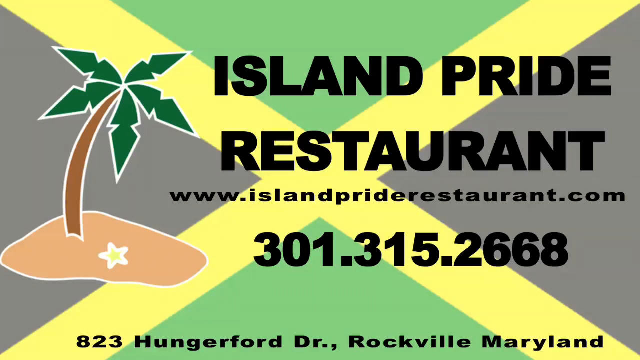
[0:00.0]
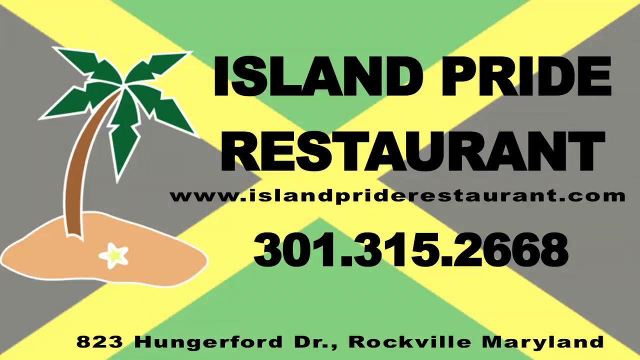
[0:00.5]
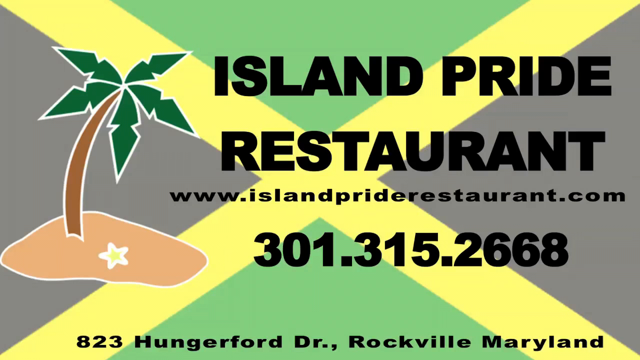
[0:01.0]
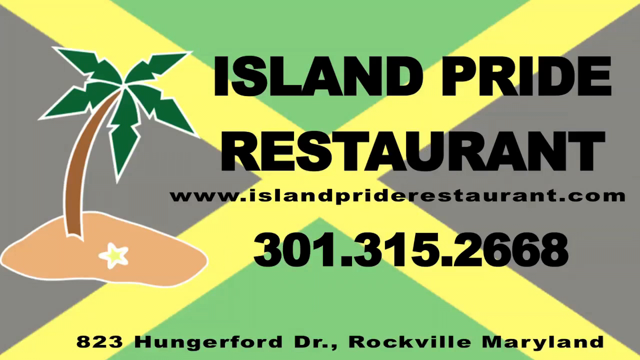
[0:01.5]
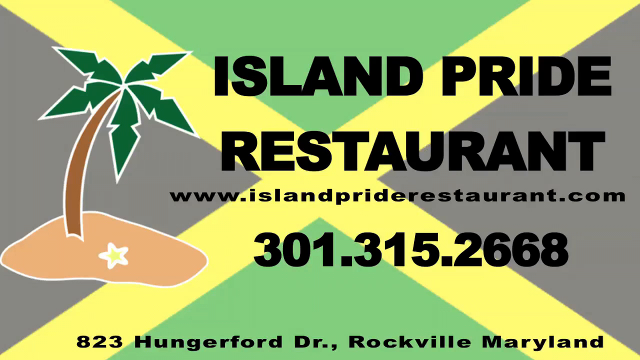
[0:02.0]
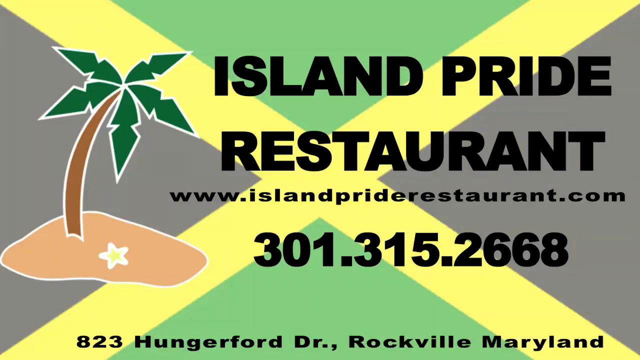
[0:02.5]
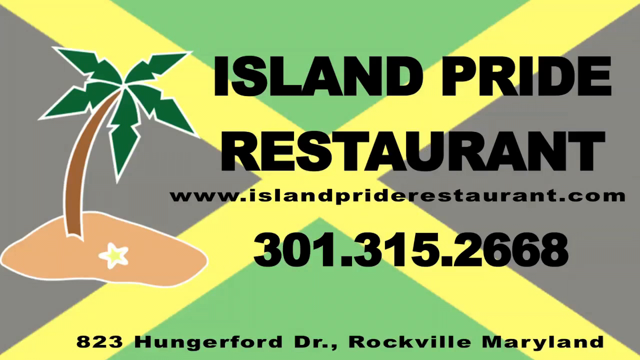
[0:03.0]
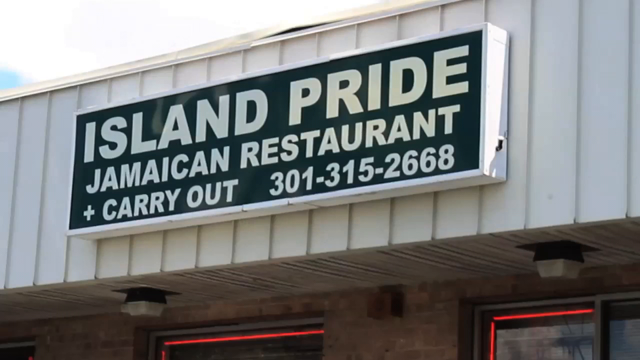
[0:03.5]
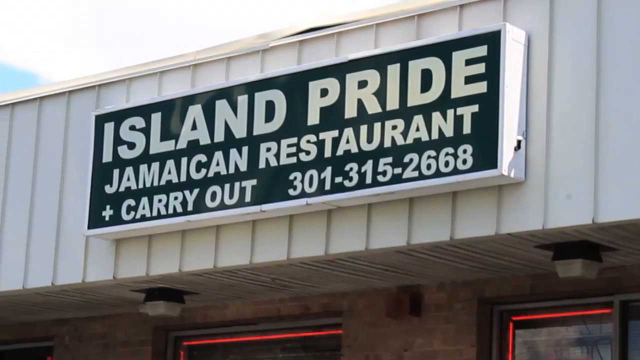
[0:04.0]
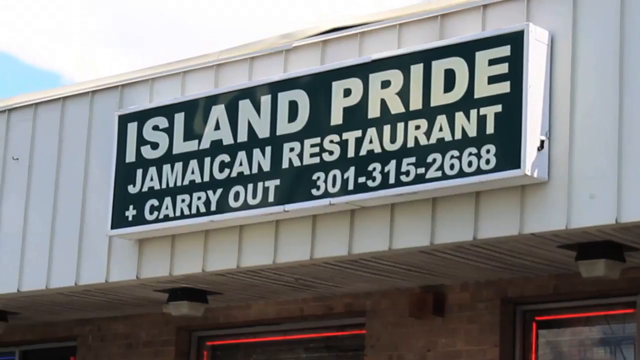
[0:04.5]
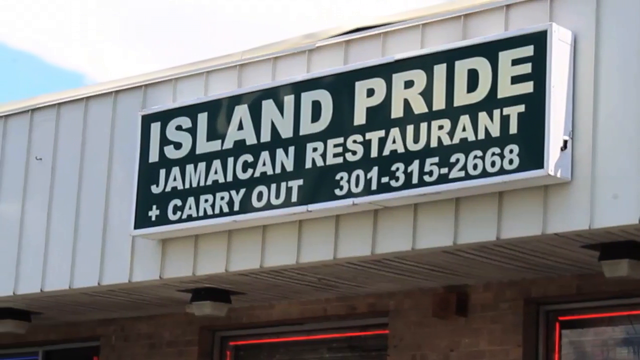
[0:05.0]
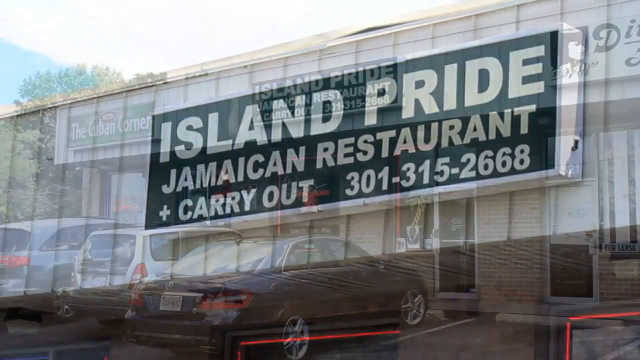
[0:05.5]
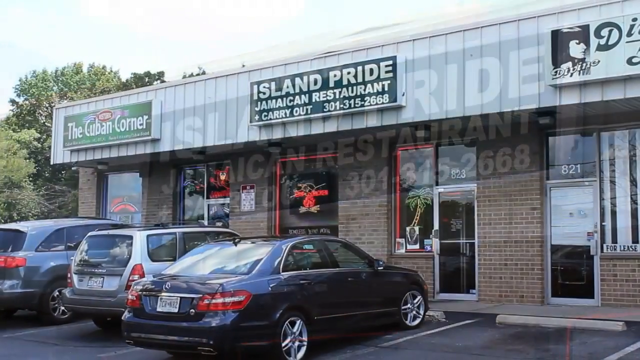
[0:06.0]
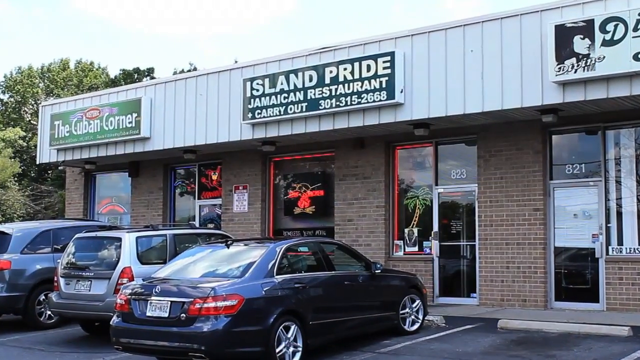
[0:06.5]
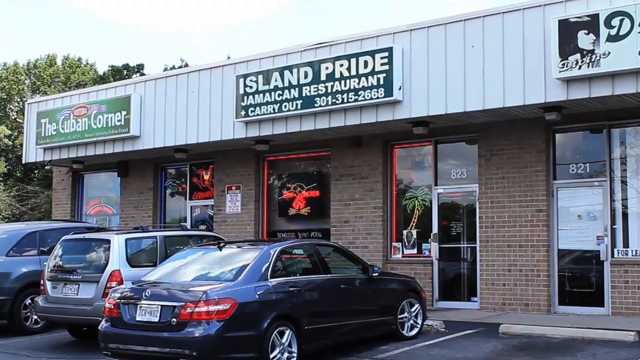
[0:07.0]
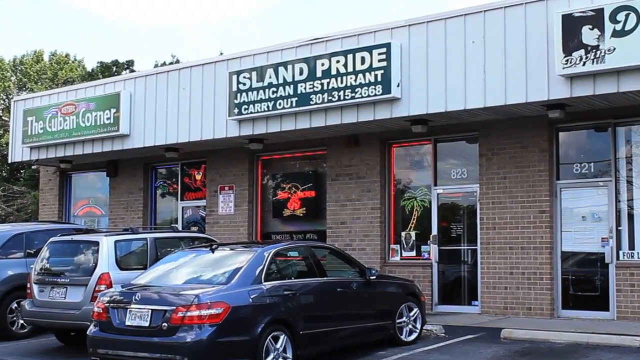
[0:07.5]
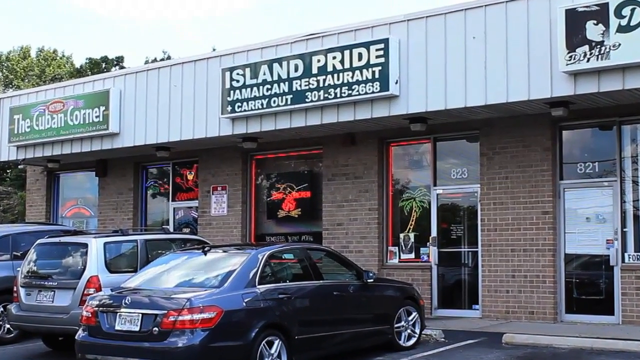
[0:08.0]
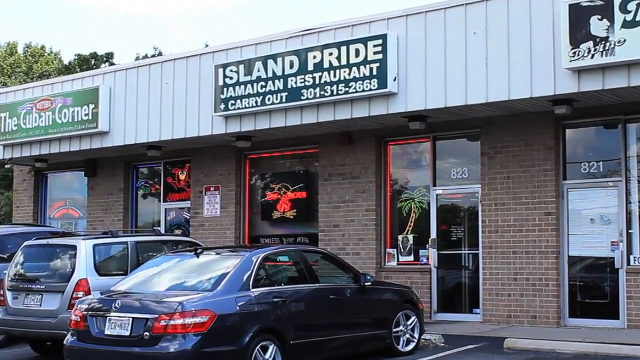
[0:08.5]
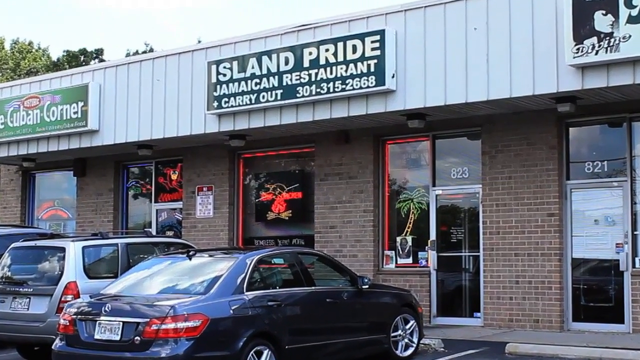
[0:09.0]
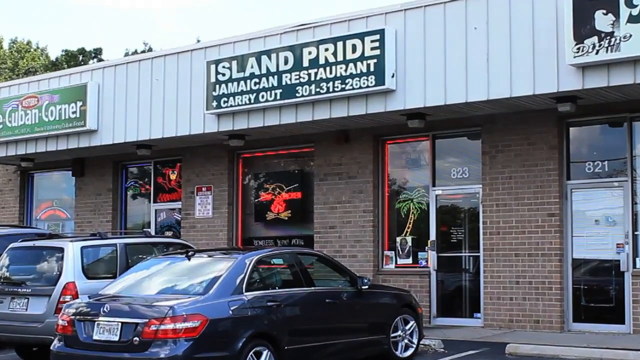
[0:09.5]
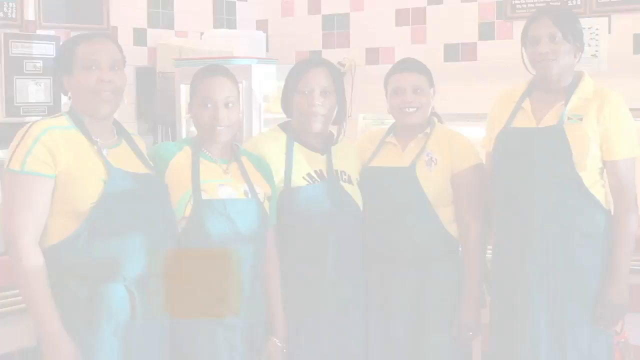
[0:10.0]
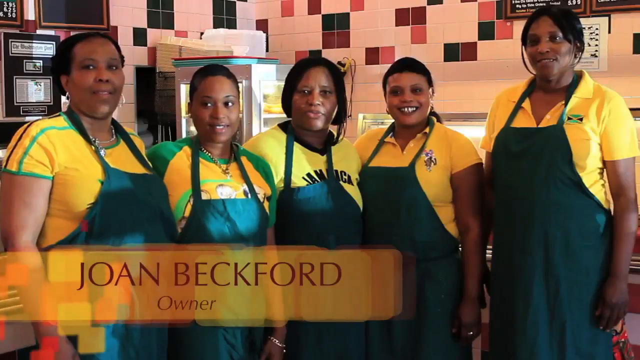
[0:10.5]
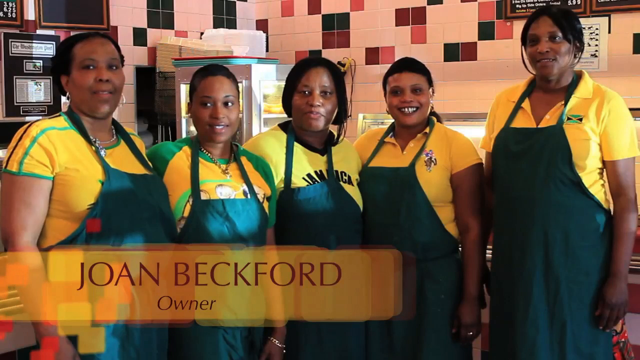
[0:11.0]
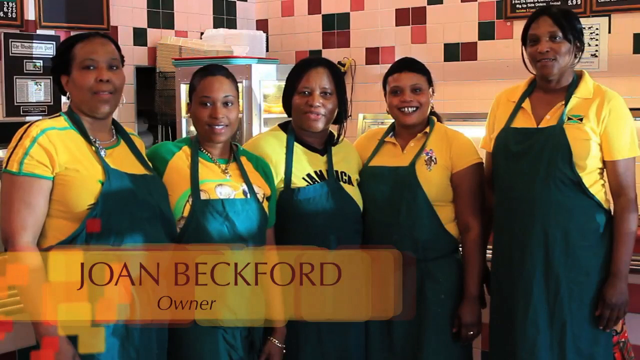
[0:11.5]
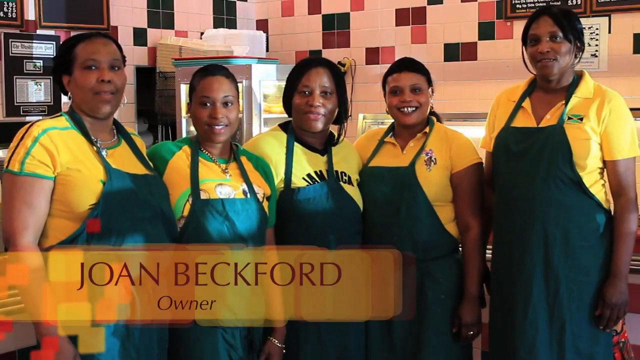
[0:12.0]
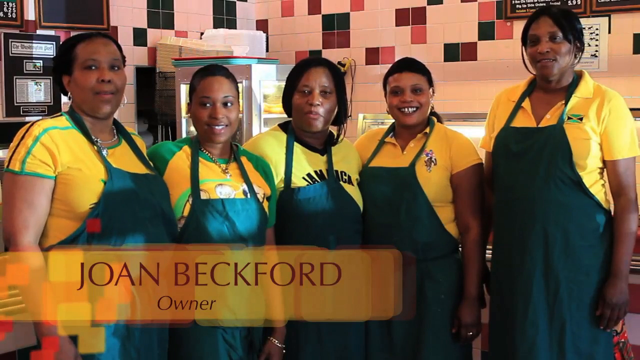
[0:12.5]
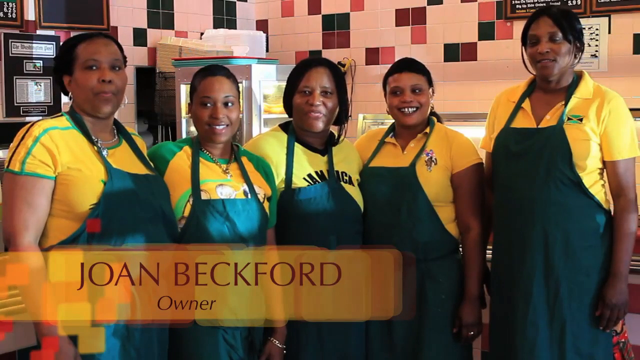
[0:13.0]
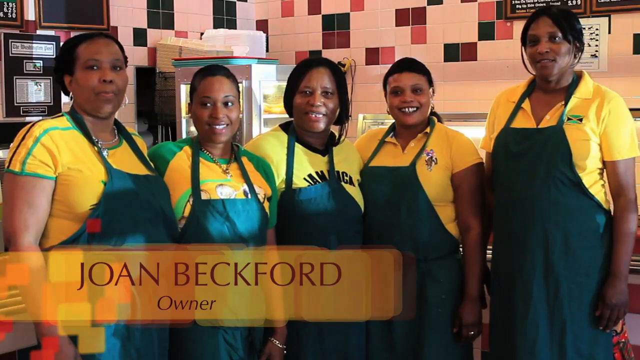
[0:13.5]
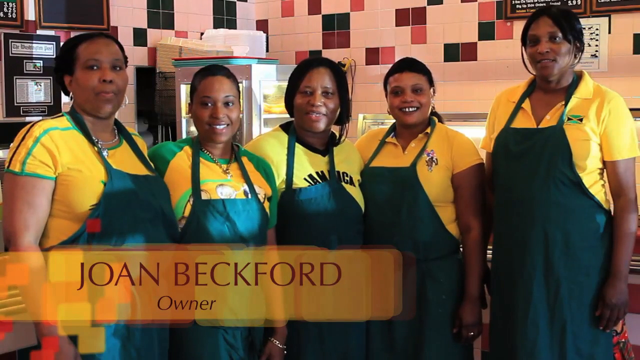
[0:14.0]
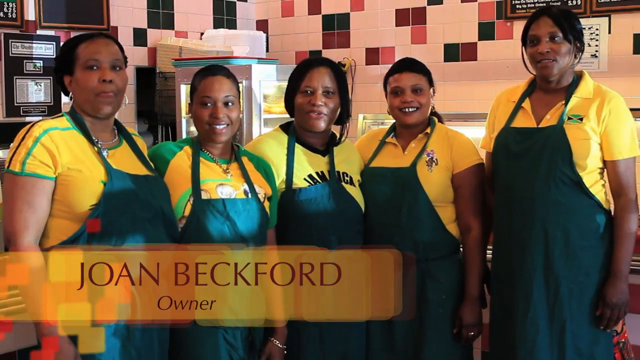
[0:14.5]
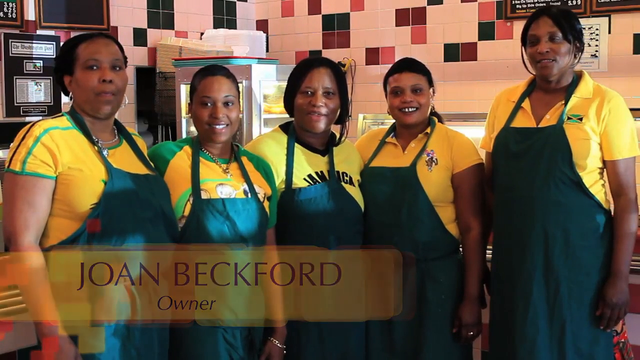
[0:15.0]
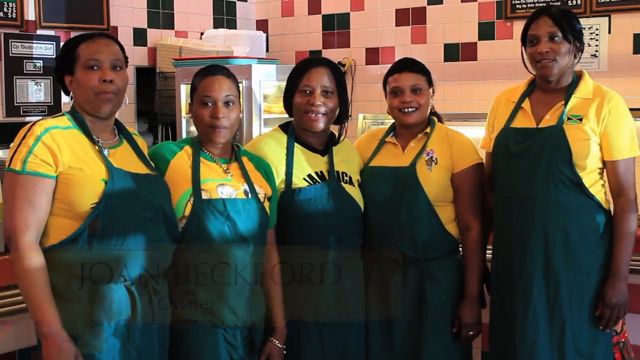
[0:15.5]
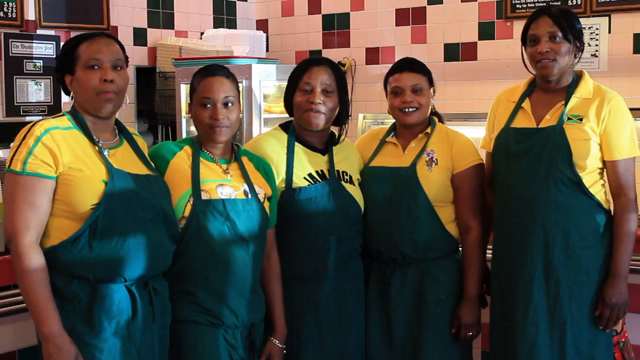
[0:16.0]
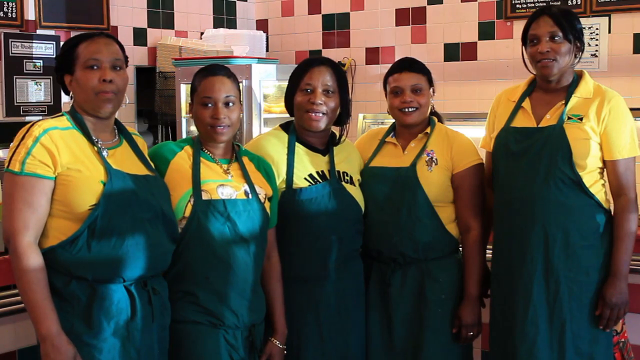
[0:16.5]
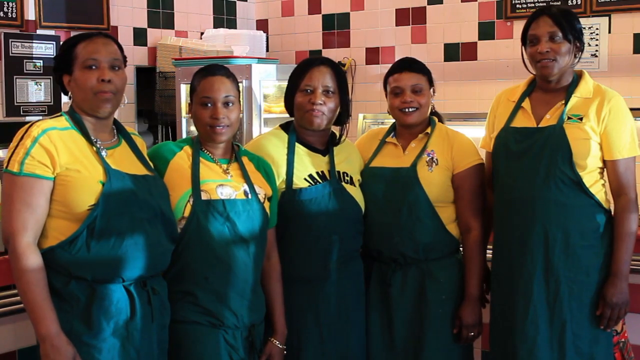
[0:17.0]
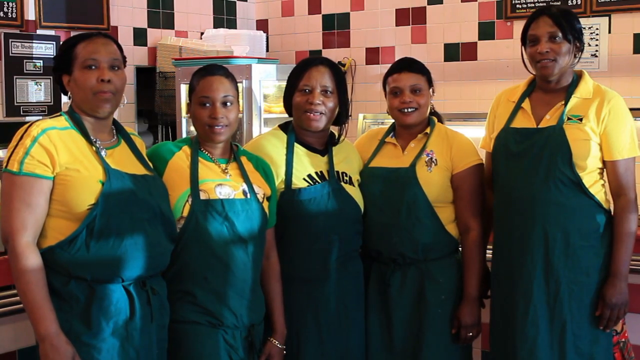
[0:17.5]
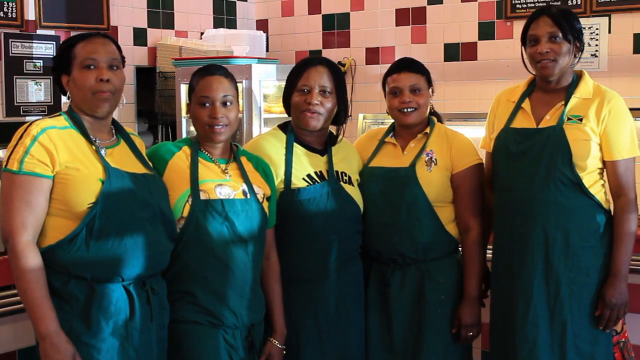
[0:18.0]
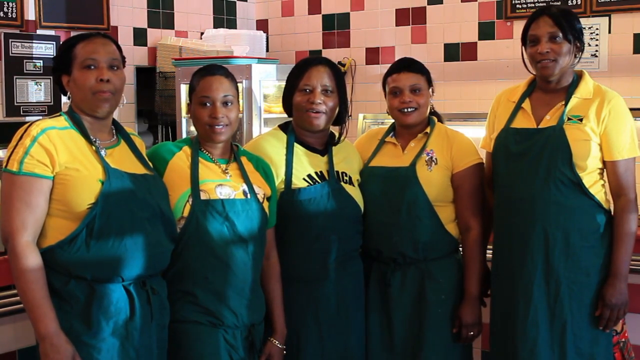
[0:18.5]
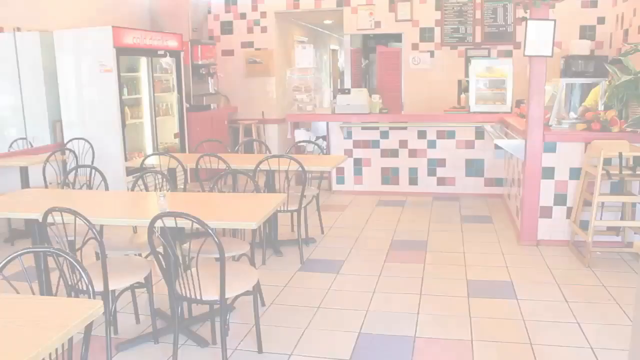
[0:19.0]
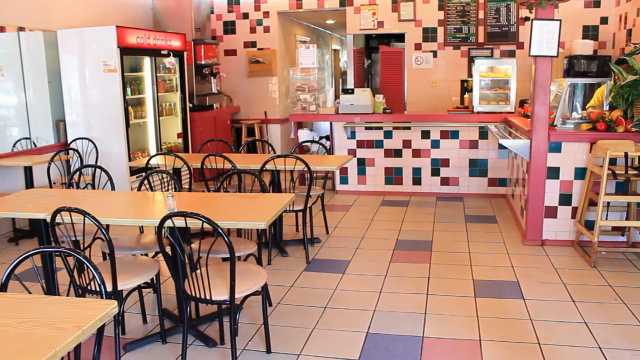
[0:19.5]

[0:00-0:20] On-screen text reads "Island Pride Jamaican restaurant carry out" along with the number "one three one five two six six eight." Joanne Beckford is the owner. A group of ladies is shown, and the restaurant appears to be Jamaican, though it is unclear whether it is in Jamaica or elsewhere. A handful of people work in the restaurant.